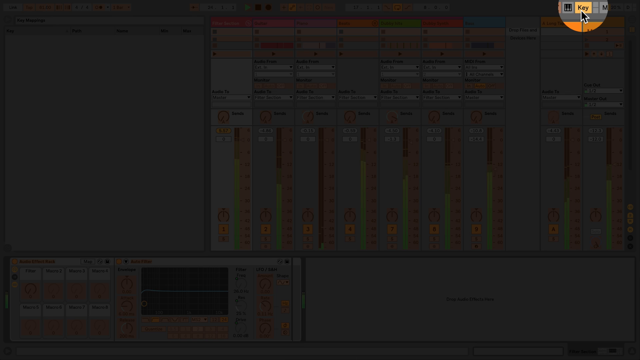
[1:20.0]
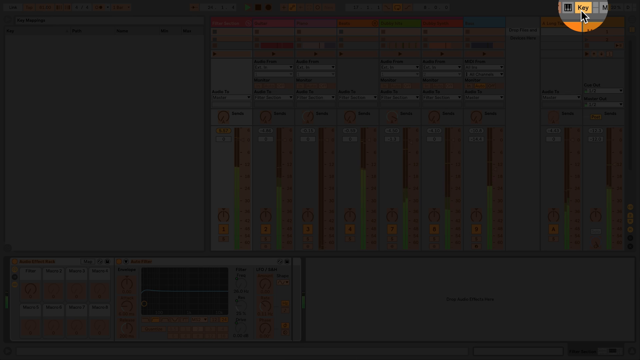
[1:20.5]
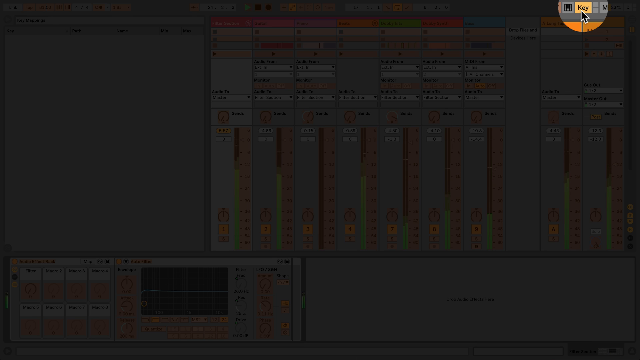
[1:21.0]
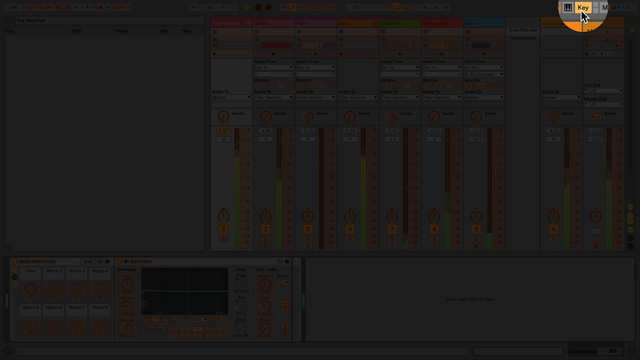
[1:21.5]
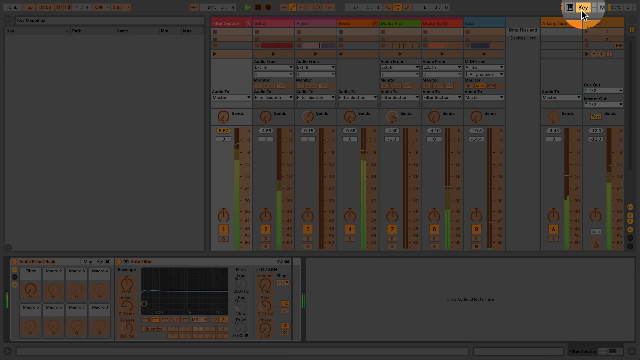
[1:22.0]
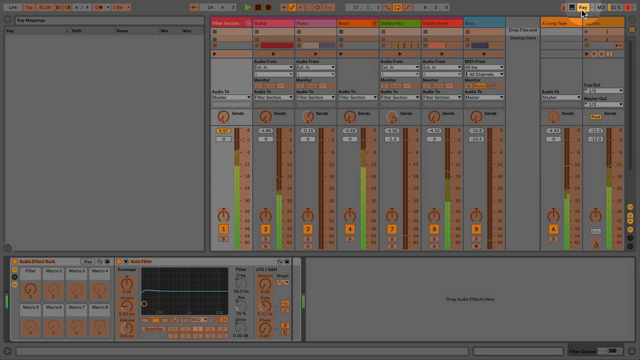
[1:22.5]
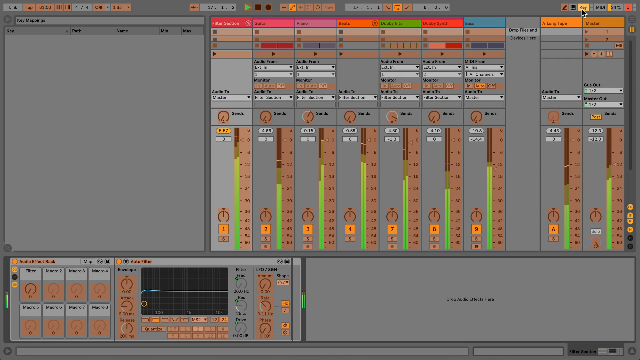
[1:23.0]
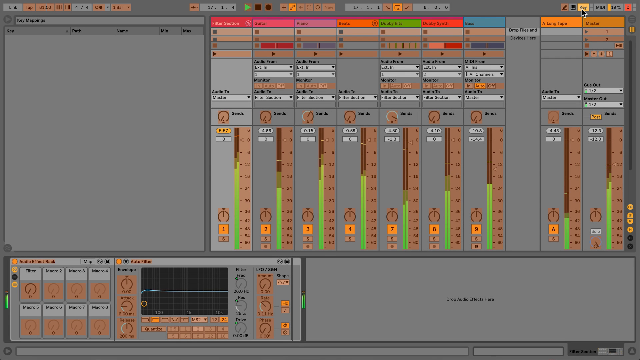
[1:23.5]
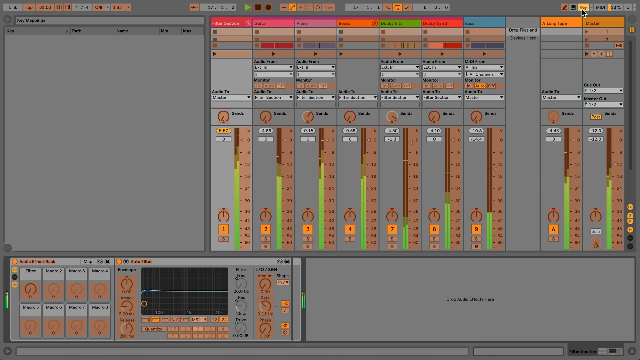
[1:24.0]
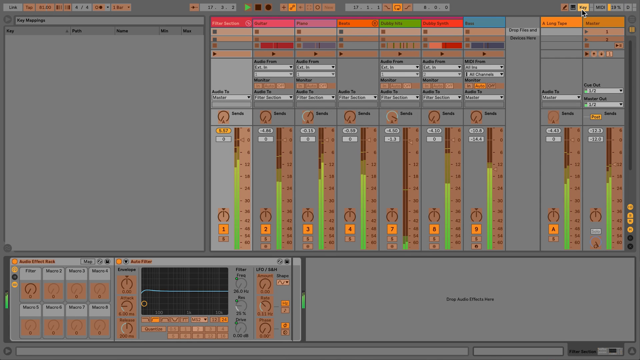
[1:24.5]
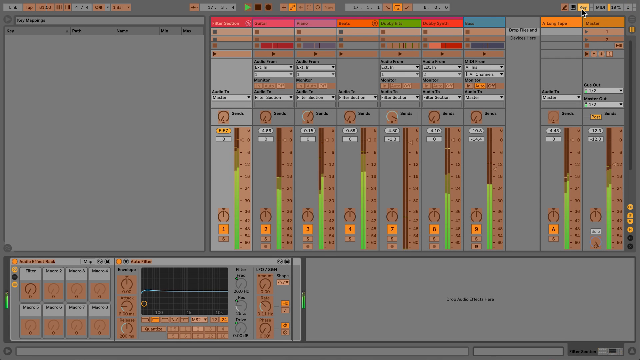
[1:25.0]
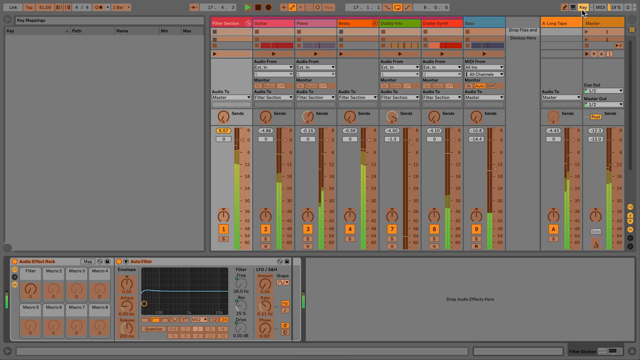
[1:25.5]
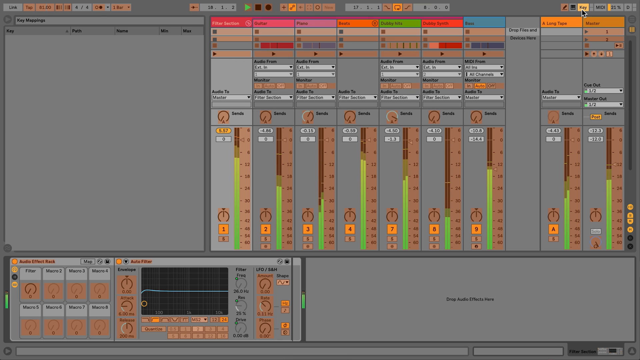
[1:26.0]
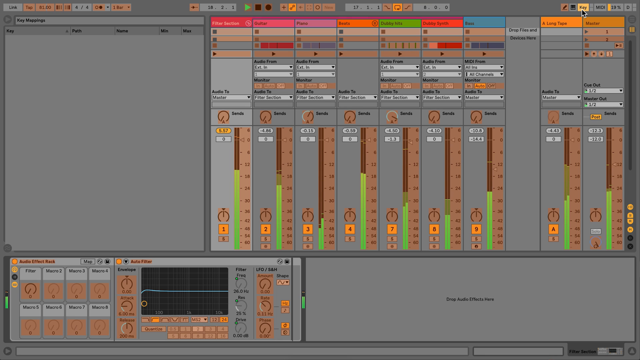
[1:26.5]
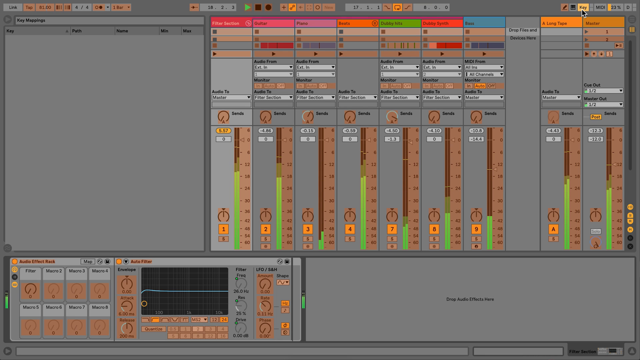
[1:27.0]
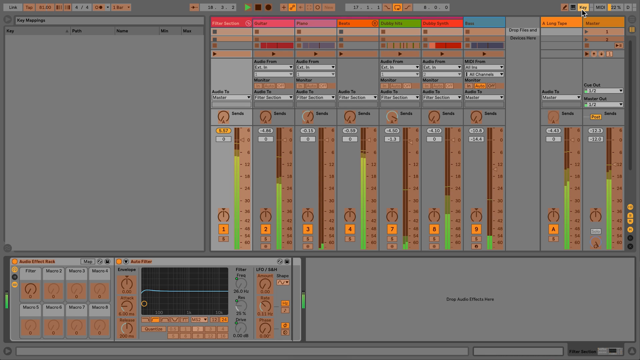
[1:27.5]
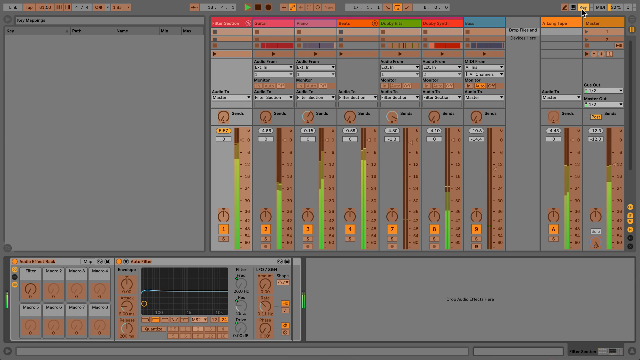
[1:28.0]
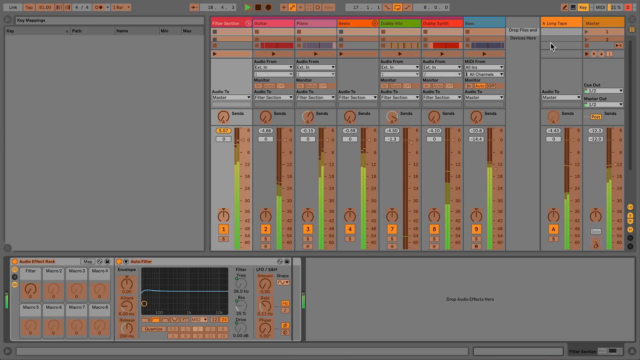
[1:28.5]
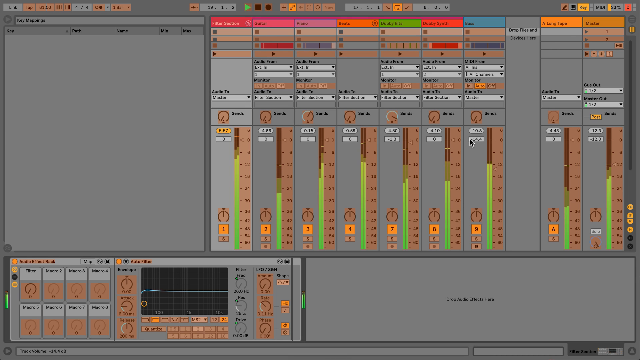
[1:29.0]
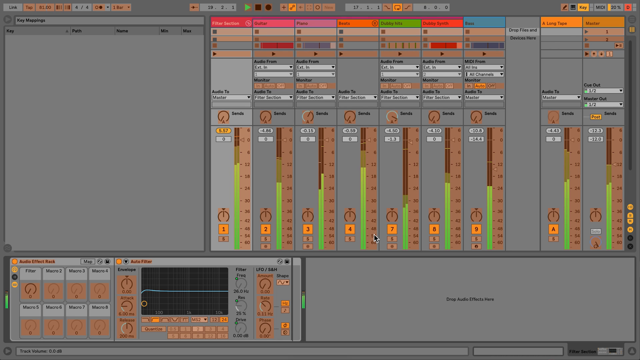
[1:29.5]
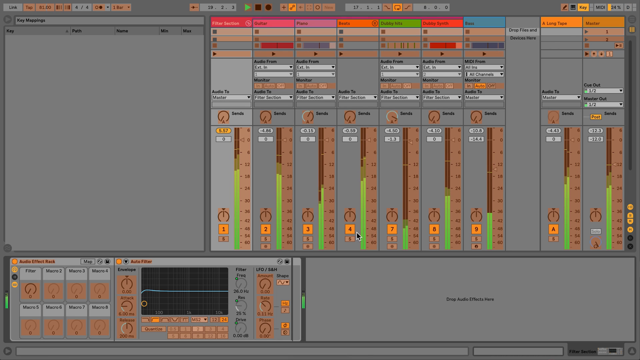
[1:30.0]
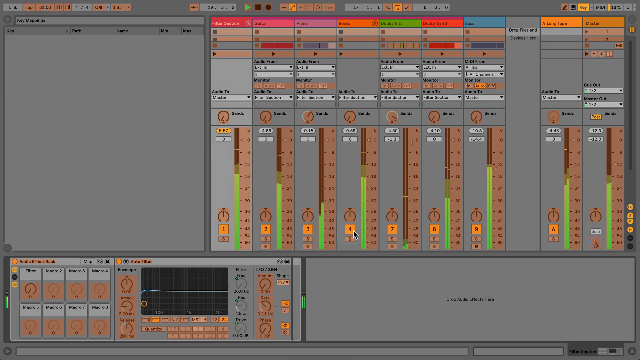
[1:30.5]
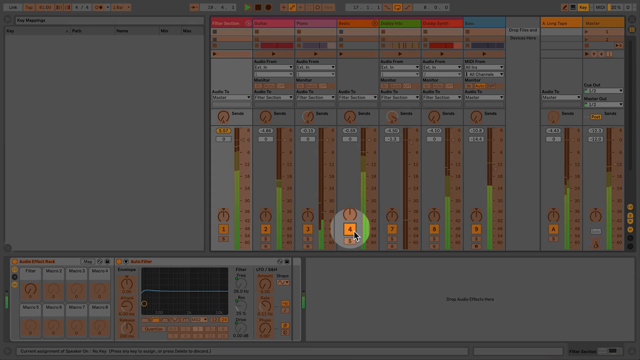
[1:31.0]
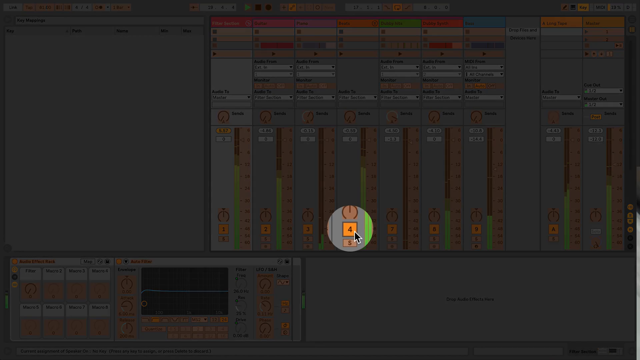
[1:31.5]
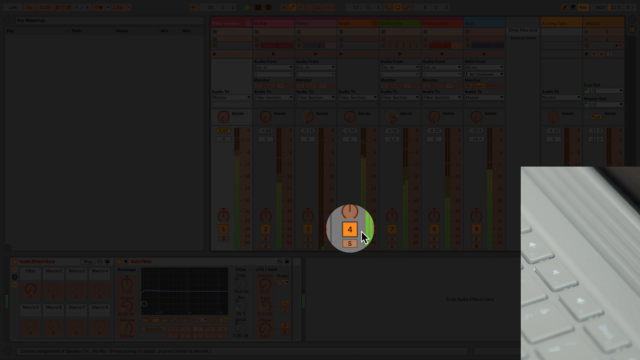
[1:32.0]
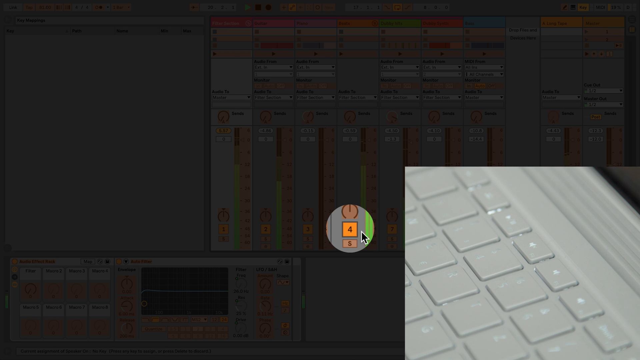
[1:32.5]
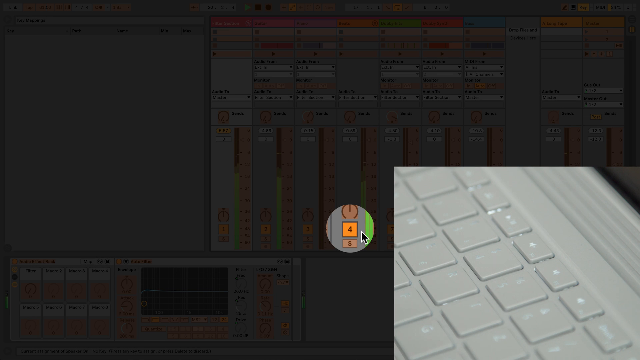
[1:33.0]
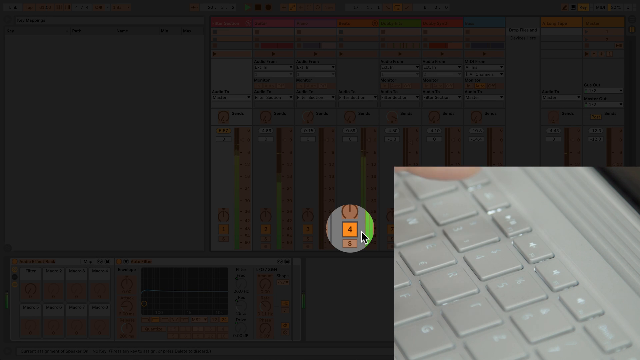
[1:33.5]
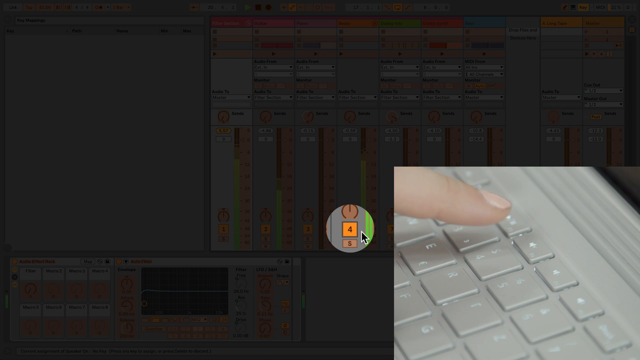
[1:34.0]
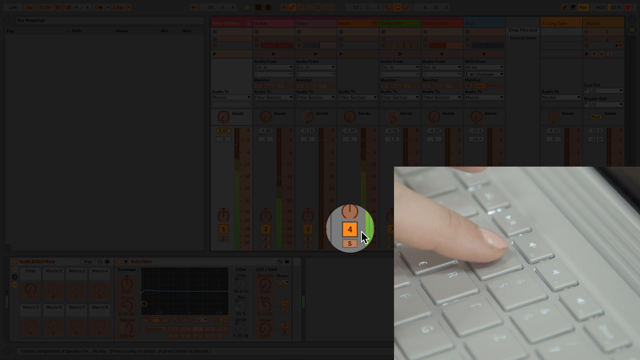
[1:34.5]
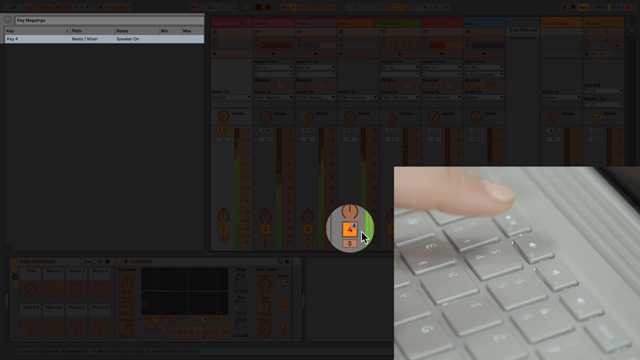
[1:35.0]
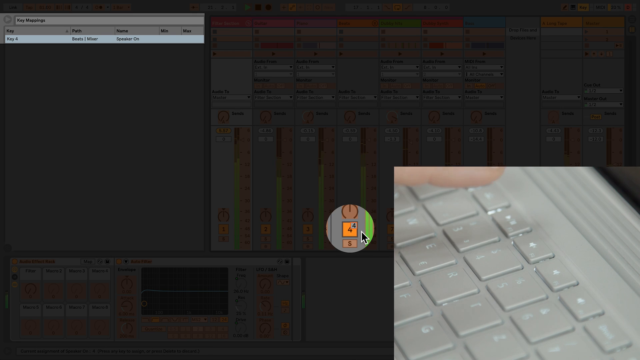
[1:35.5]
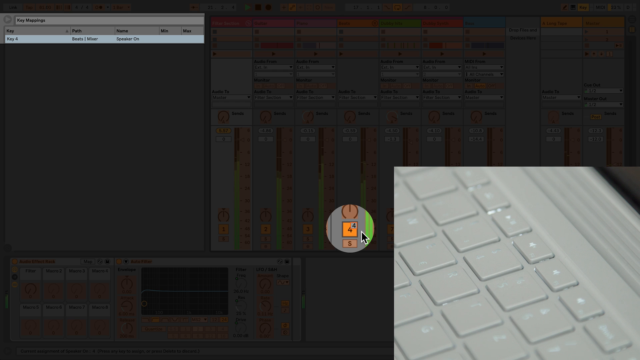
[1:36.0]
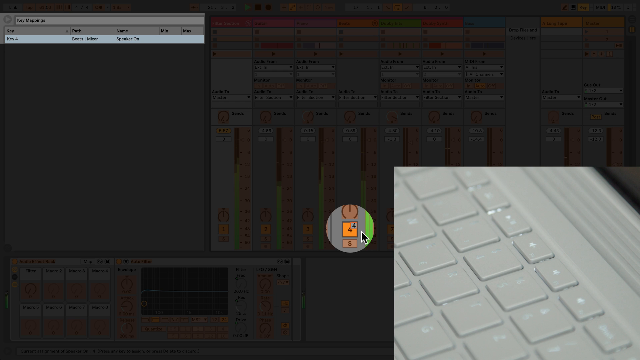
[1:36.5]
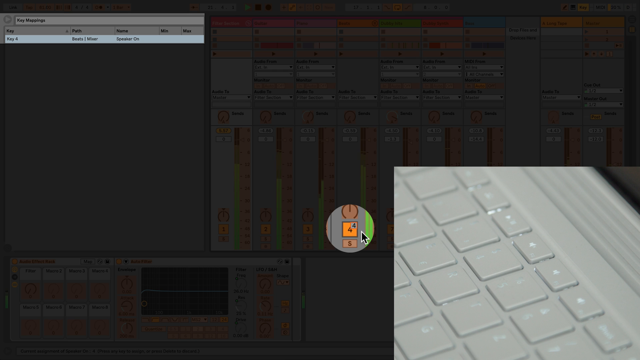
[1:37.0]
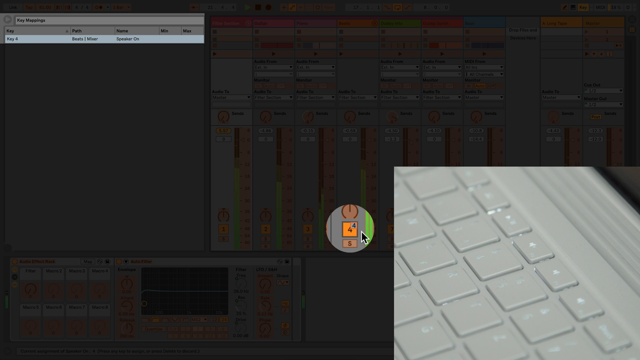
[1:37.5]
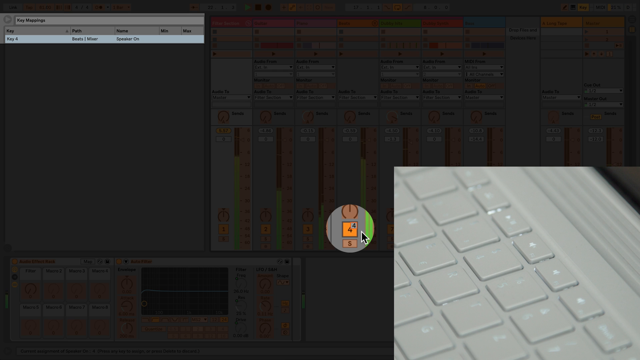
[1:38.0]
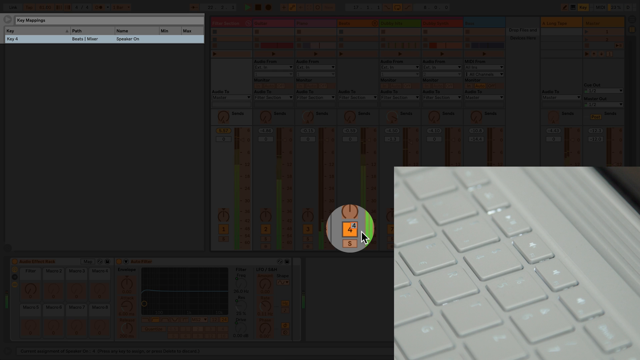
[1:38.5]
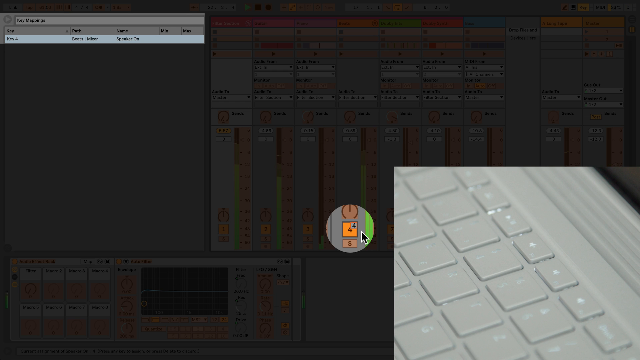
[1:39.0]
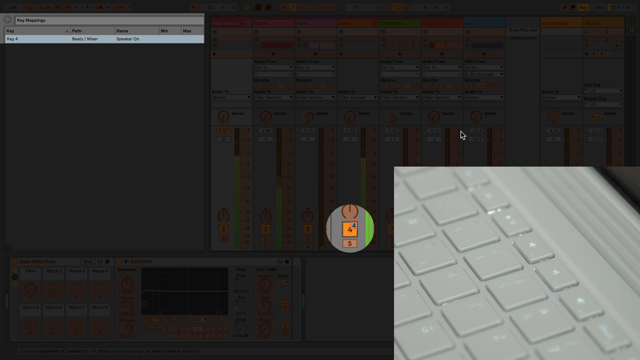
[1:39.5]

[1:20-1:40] The mixing board on the computer screen is grayed out, and a little circle highlights an area at the upper right of the screen showing the word "key". The mouse pointer hovers there and selects it, and the mixer screen changes to a different color and tone. The fourth input is highlighted, showing a little circular gain button, the number 4 over an orange box, and an S button below. To the right, an inset video of a computer keyboard appears, where a forefinger presses the number 4 key. When the 4 key is pressed, a window pops up in the upper left portion of the screen with the text "key 4, speaker on", showing that the computer keyboard changes settings in the mixing application.